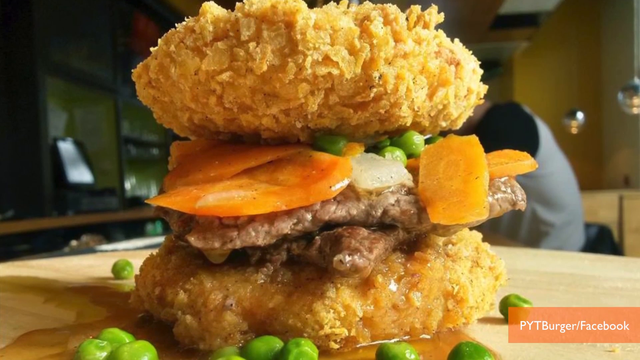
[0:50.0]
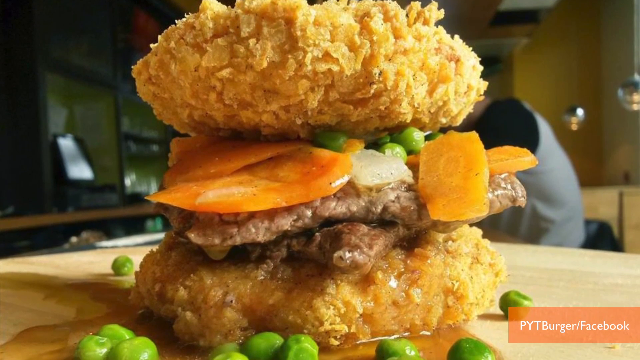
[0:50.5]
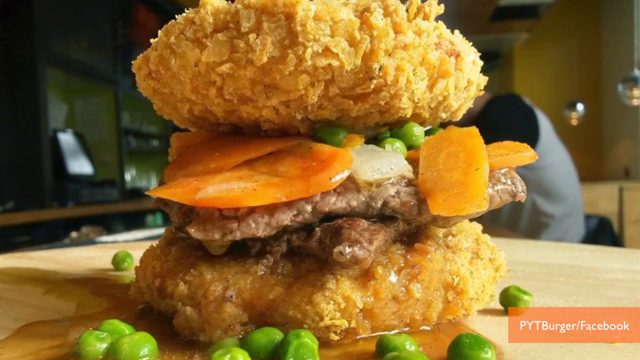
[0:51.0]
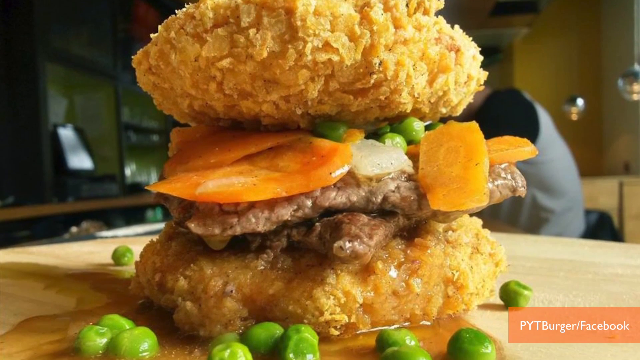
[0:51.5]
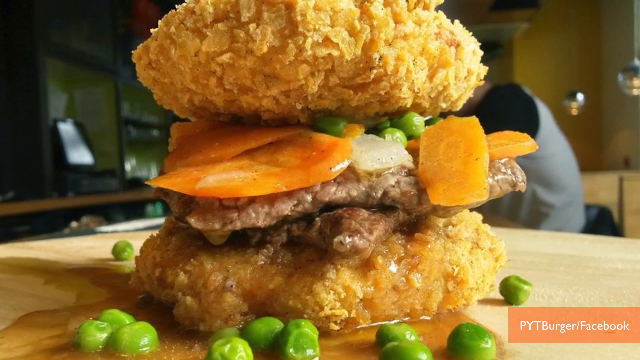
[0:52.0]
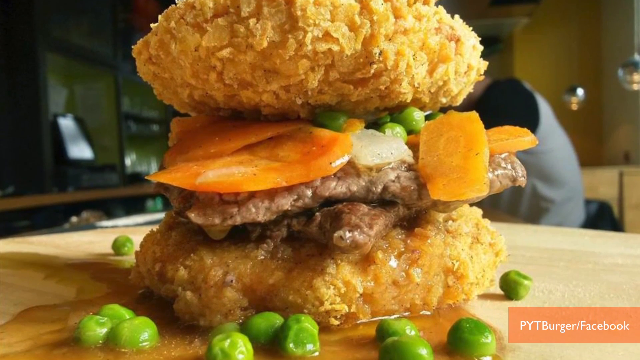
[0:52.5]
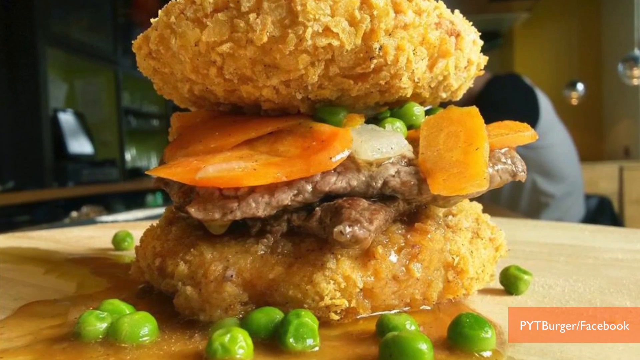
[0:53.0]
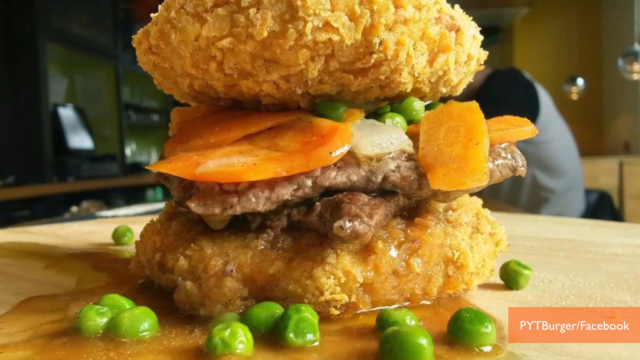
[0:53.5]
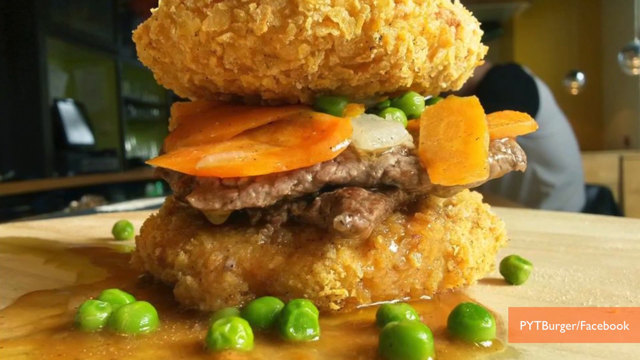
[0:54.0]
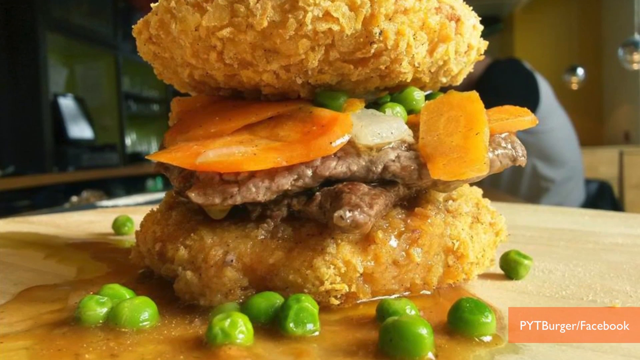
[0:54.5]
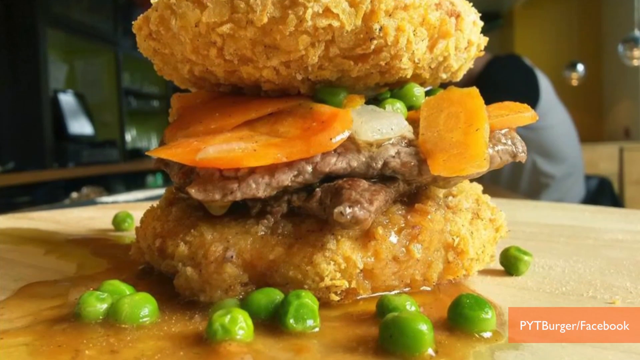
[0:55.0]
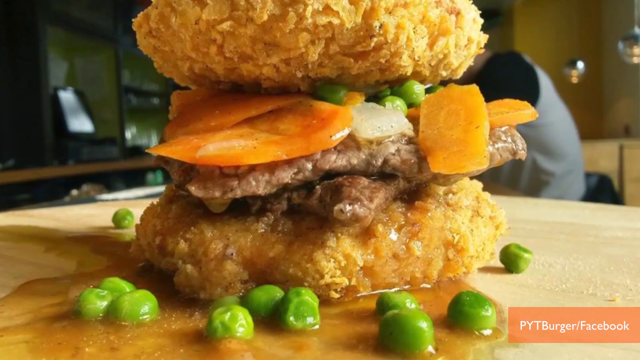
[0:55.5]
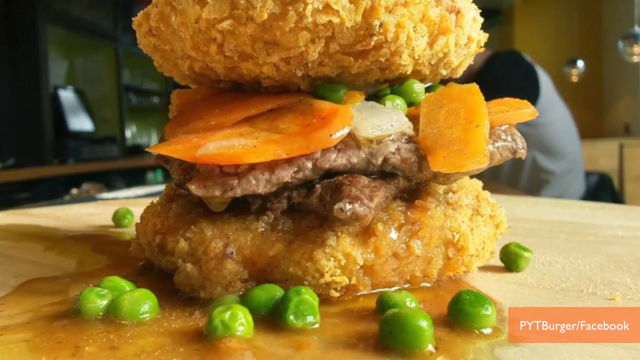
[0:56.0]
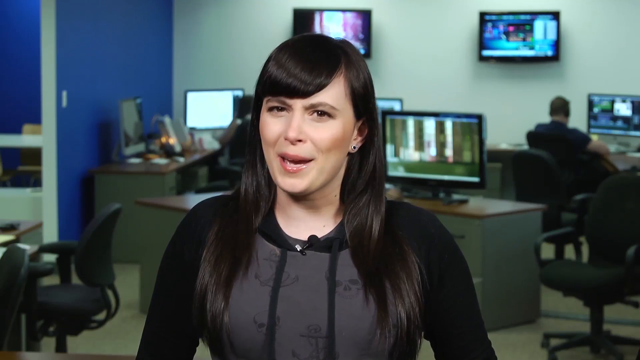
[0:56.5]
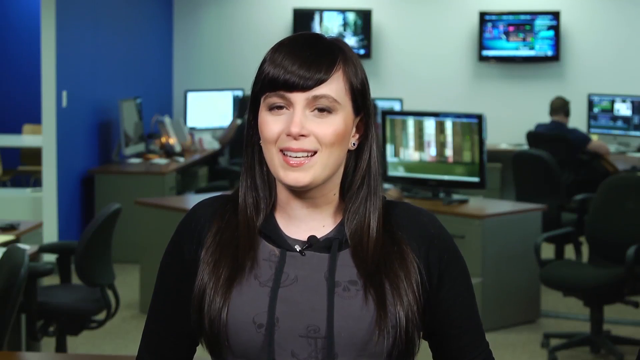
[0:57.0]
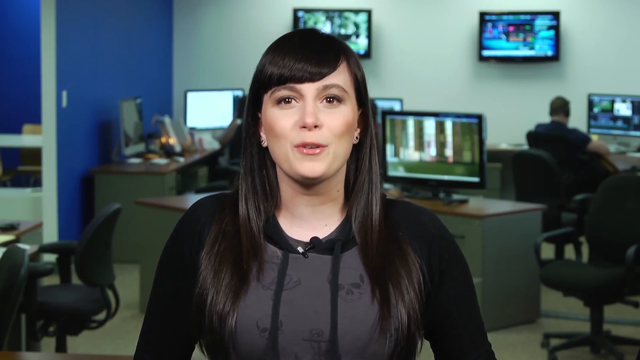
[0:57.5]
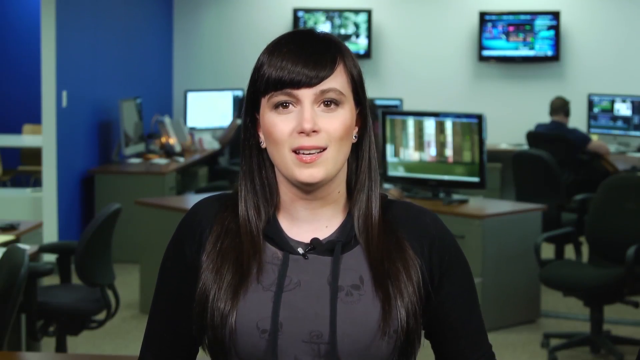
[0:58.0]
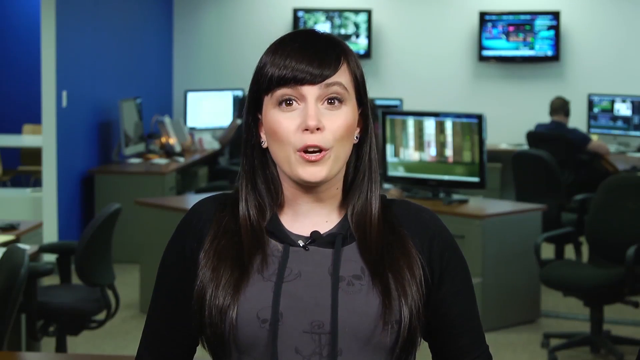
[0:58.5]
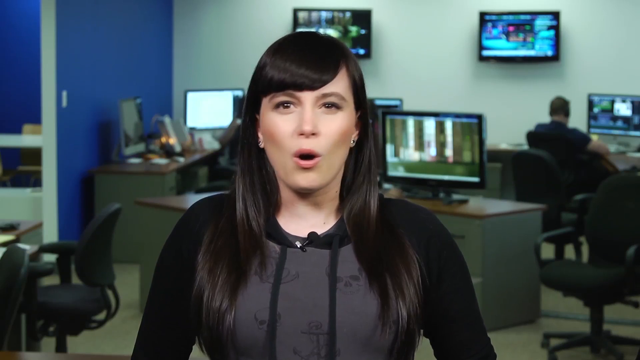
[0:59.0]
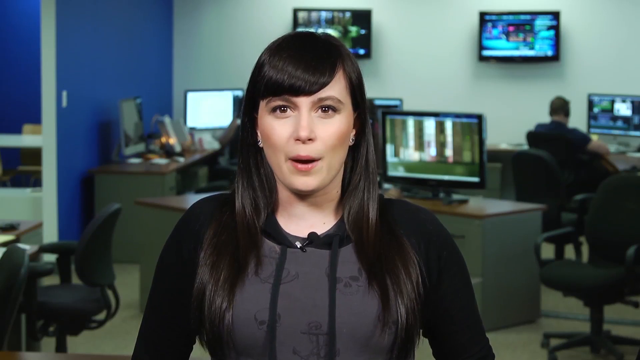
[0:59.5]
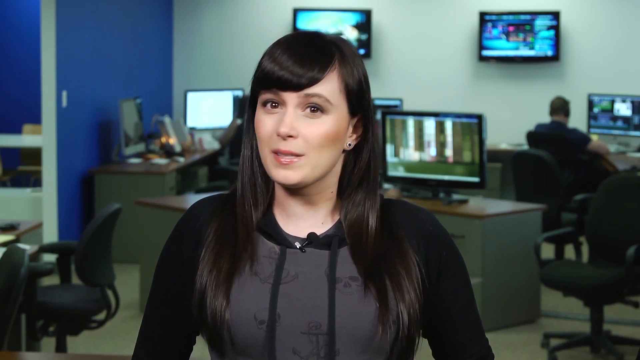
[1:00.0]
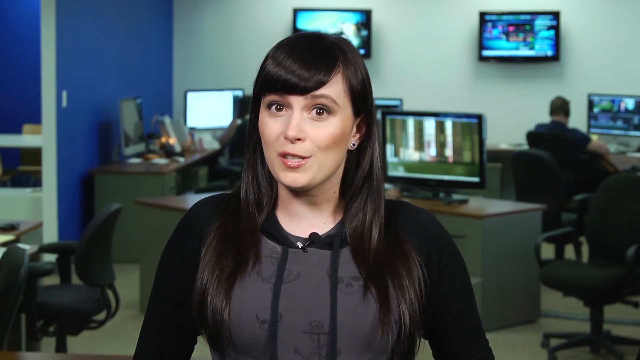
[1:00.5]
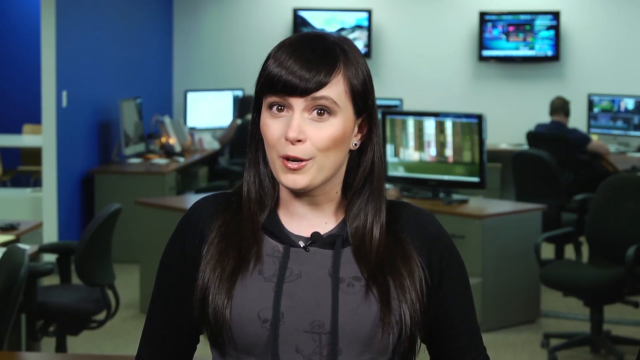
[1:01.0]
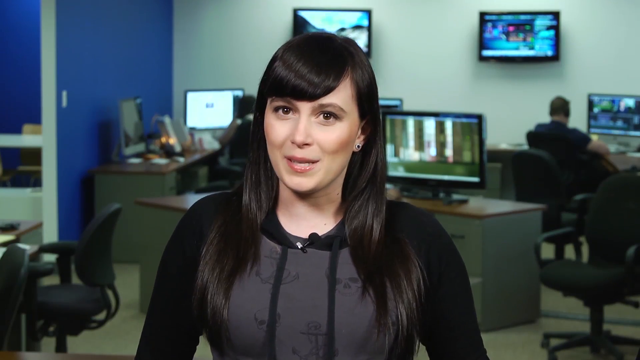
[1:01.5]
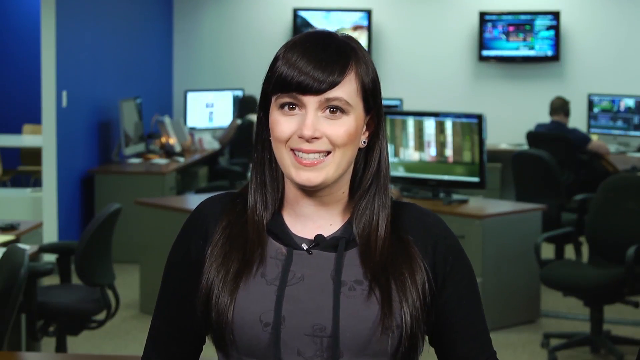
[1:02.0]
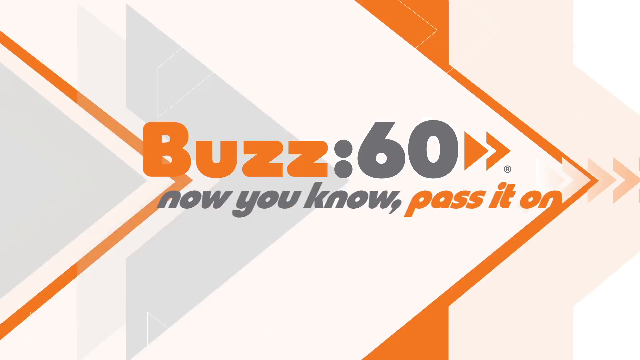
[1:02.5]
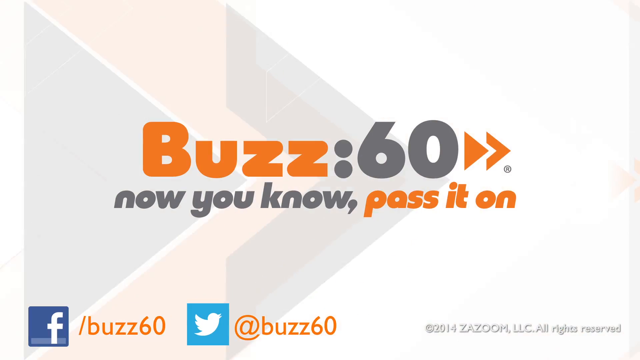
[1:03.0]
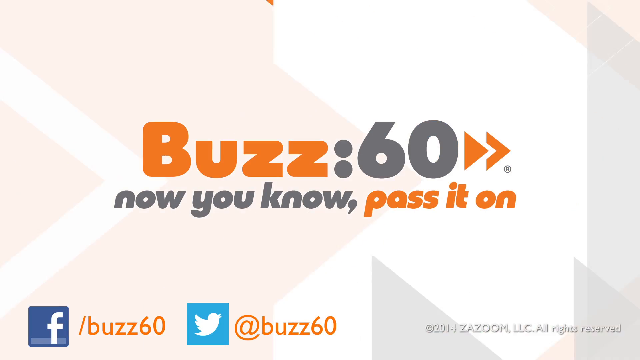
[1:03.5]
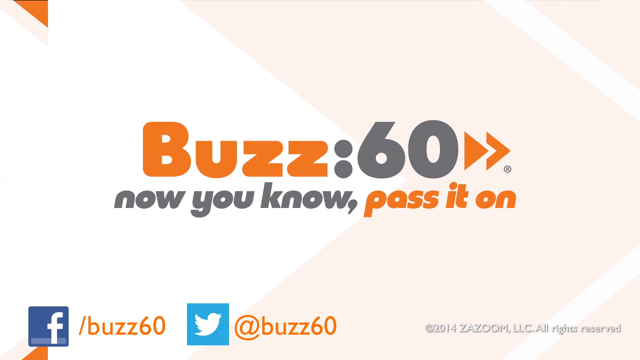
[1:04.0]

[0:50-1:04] A different kind of hamburger is shown, apparently made at a restaurant. It has peas thrown on the sides and looks like a burger without the bread: two fried pieces of food with all different vegetables in the middle, such as carrots, peas and onion, and what looks like a burger part that may be a natural burger. It does not look like a regular hamburger. Someone in a gray shirt with a black sleeve is sitting behind the burger. There are hanging lights, and on the left side there is a little kiosk or possibly a small TV. The woman comes back and talks; her hair is to the side, and her bangs stay on her forehead, kind of going to the side. There are monitors behind her and two people working in the office behind her. The screen says "Buzz 60 now you know."